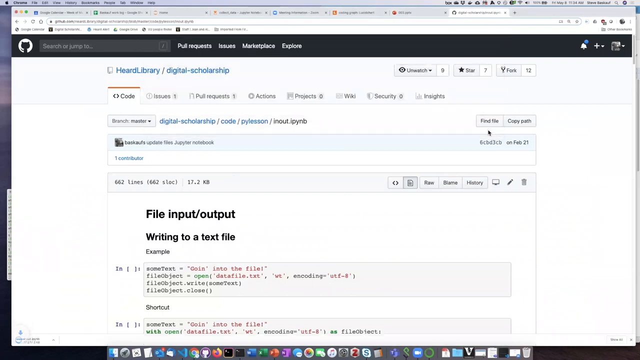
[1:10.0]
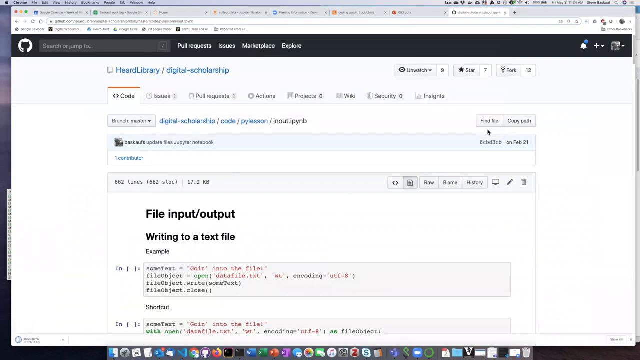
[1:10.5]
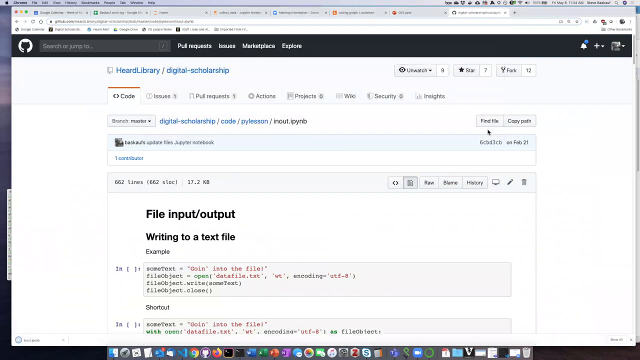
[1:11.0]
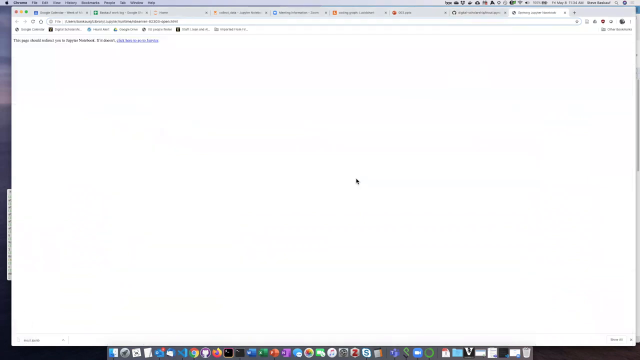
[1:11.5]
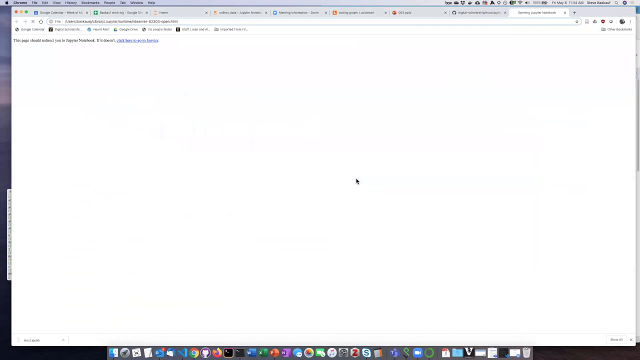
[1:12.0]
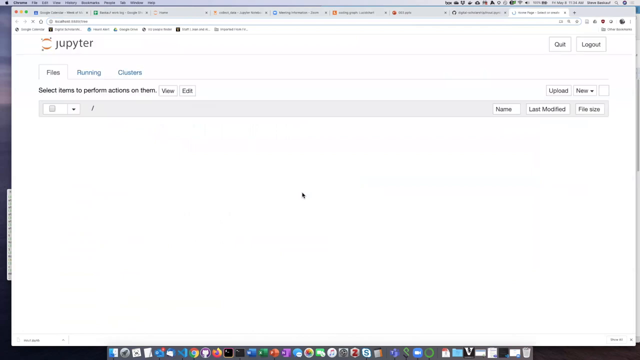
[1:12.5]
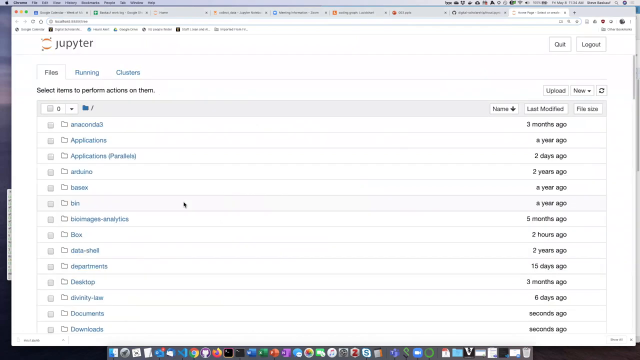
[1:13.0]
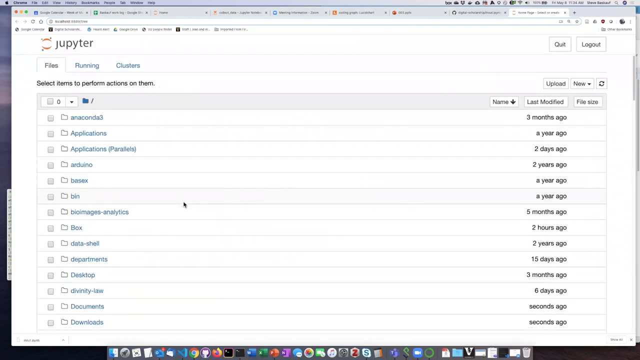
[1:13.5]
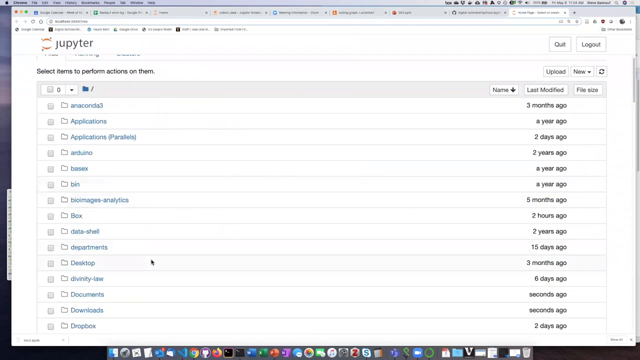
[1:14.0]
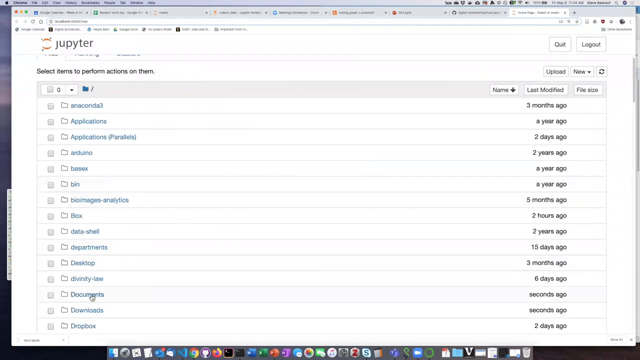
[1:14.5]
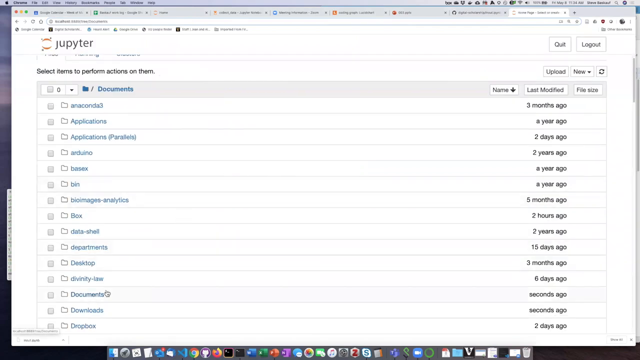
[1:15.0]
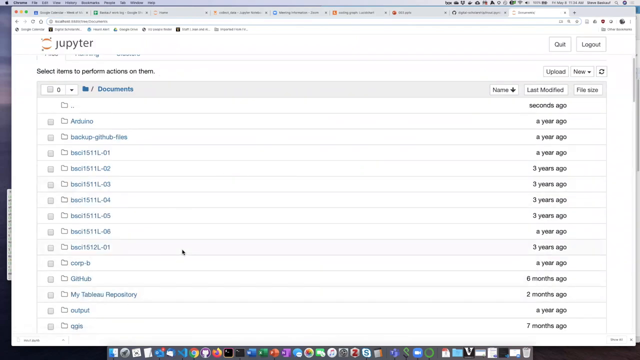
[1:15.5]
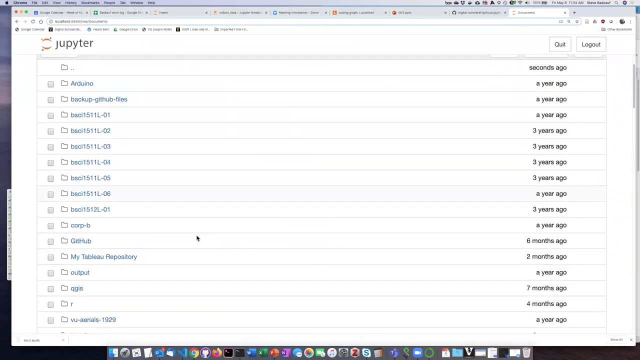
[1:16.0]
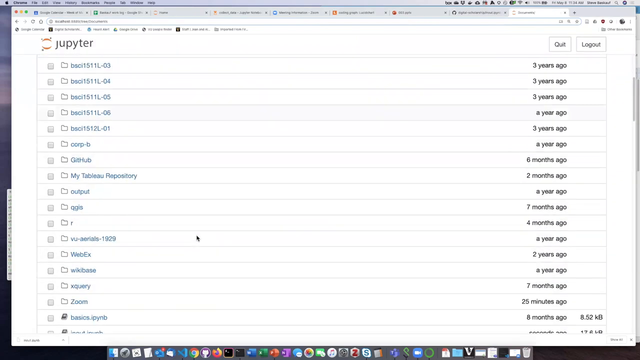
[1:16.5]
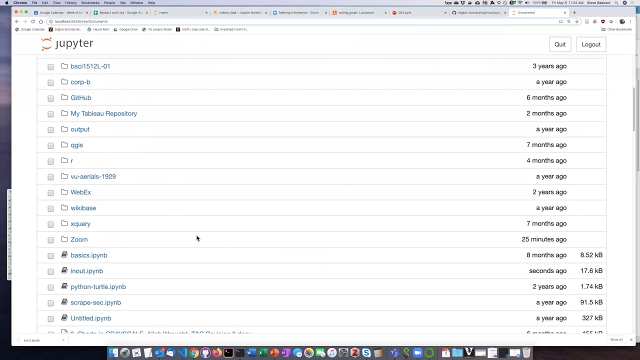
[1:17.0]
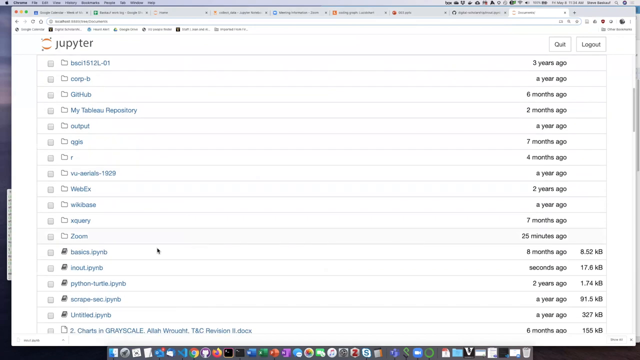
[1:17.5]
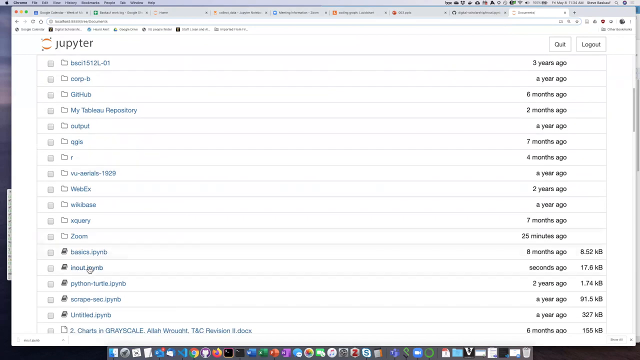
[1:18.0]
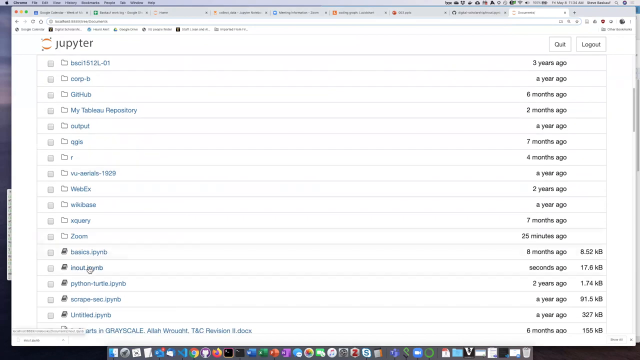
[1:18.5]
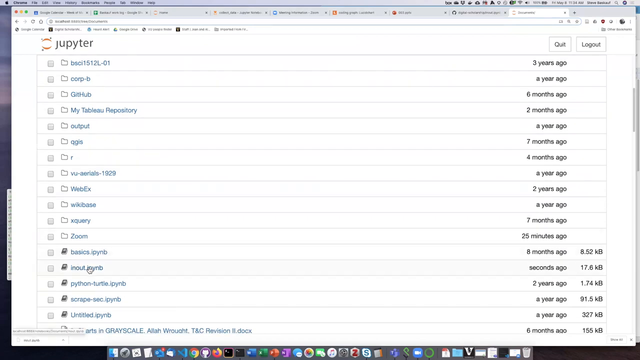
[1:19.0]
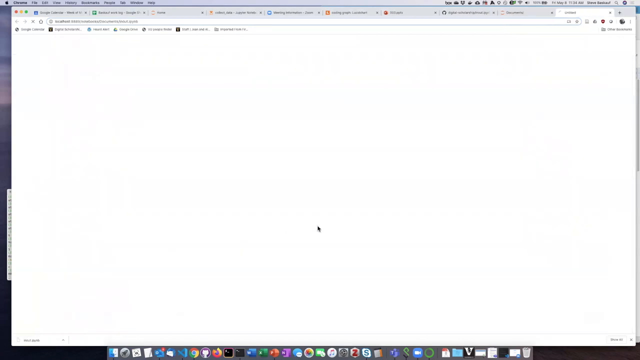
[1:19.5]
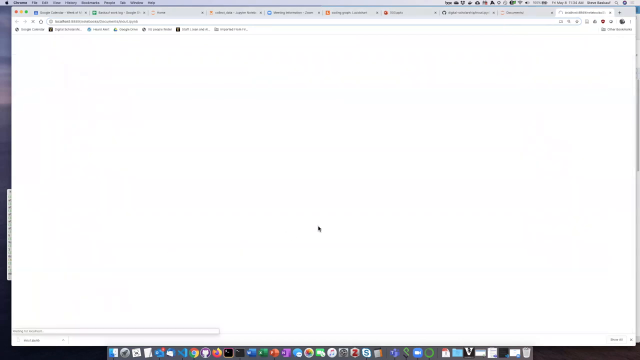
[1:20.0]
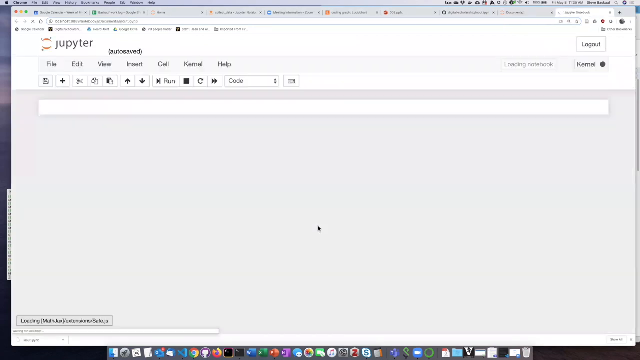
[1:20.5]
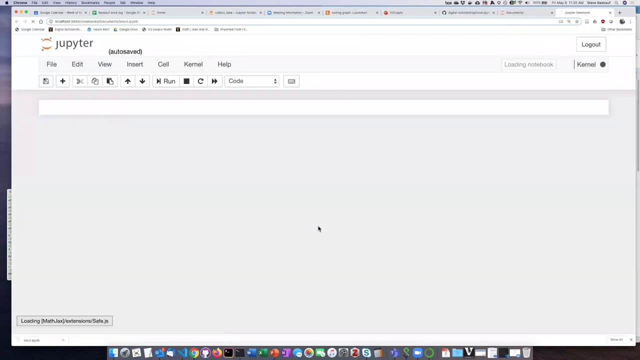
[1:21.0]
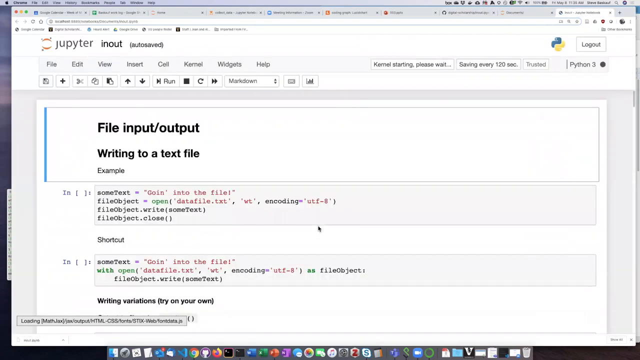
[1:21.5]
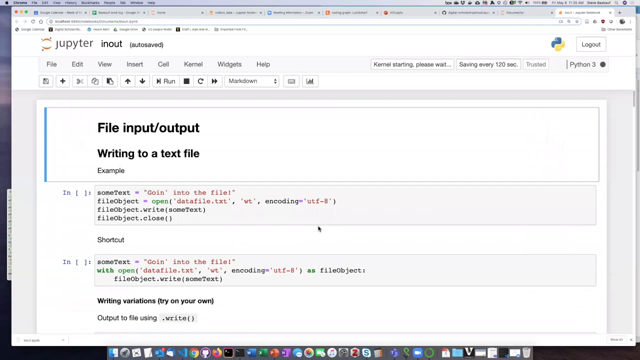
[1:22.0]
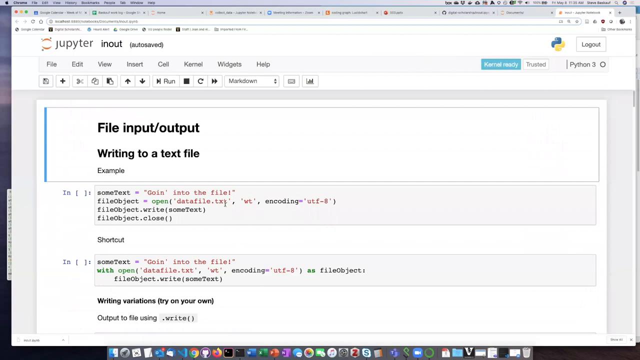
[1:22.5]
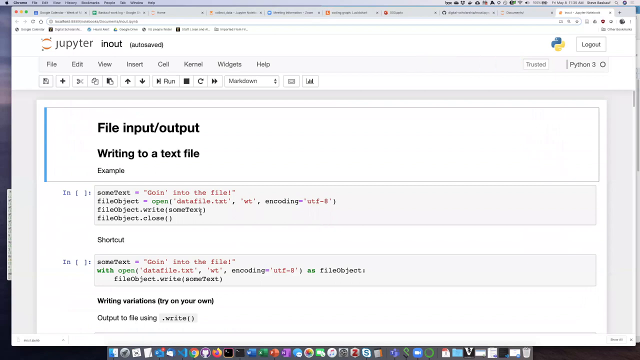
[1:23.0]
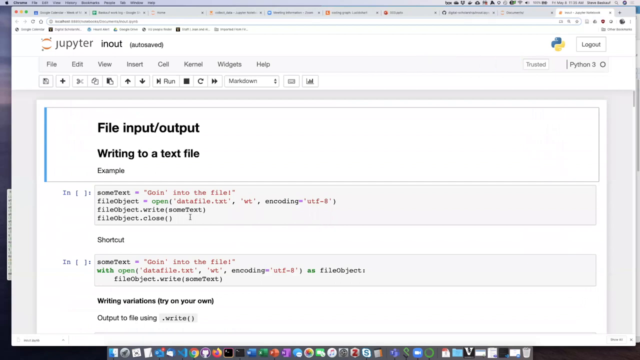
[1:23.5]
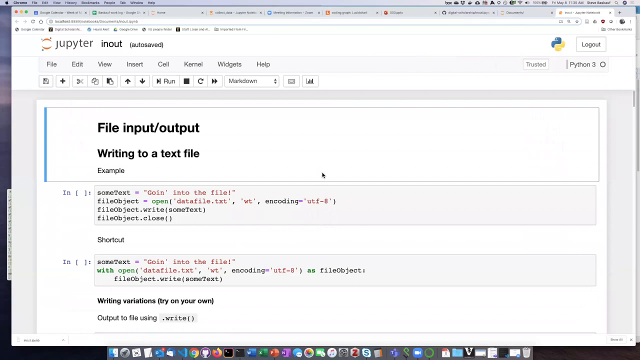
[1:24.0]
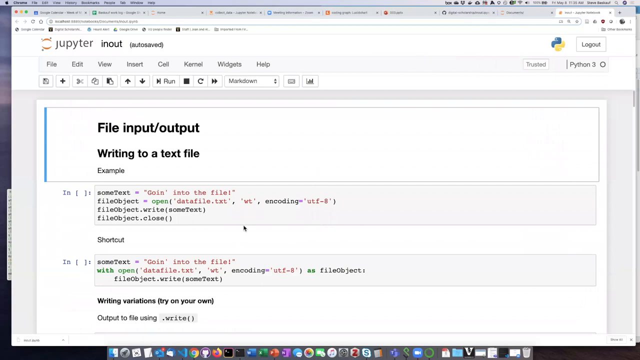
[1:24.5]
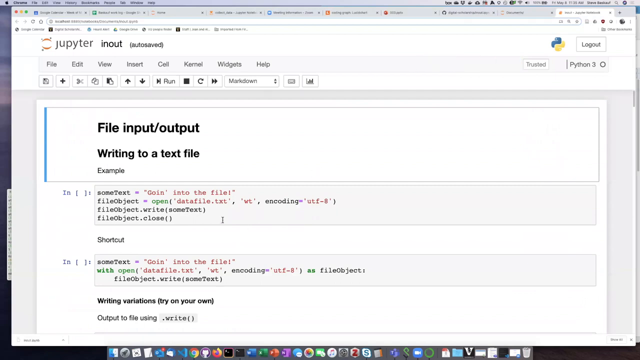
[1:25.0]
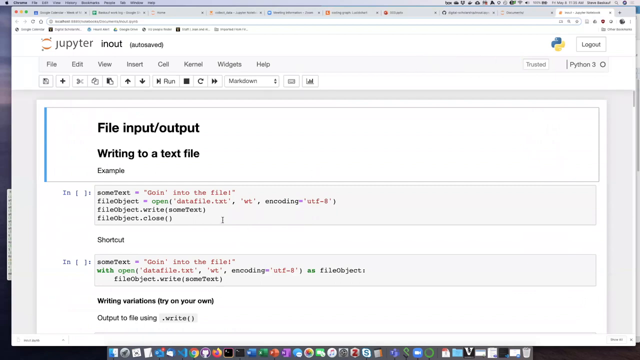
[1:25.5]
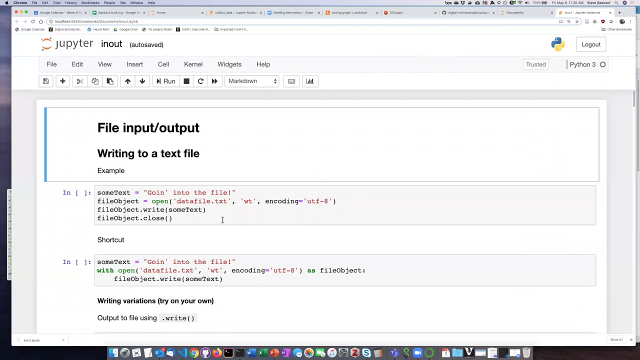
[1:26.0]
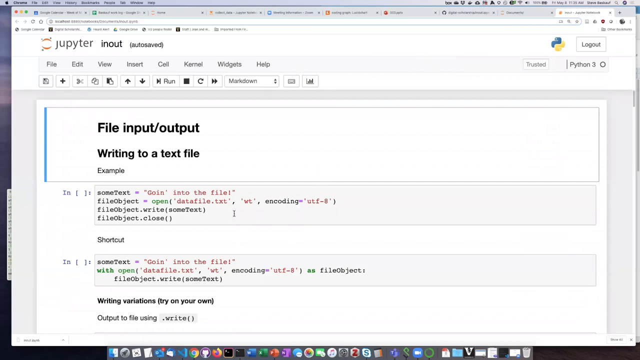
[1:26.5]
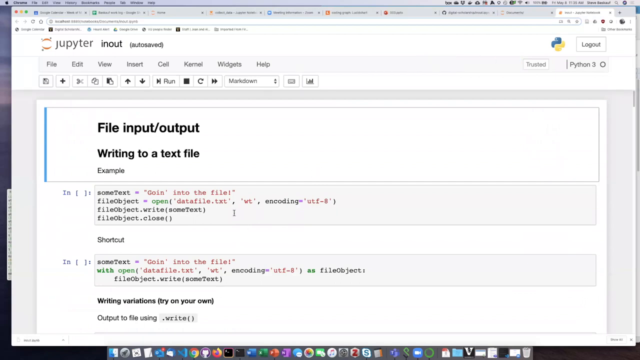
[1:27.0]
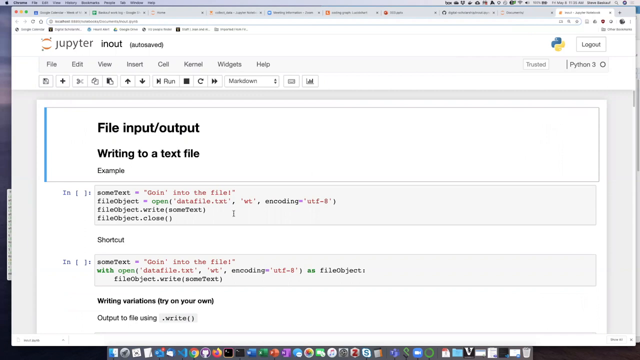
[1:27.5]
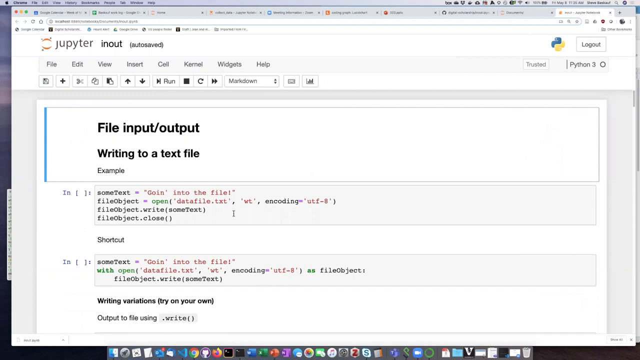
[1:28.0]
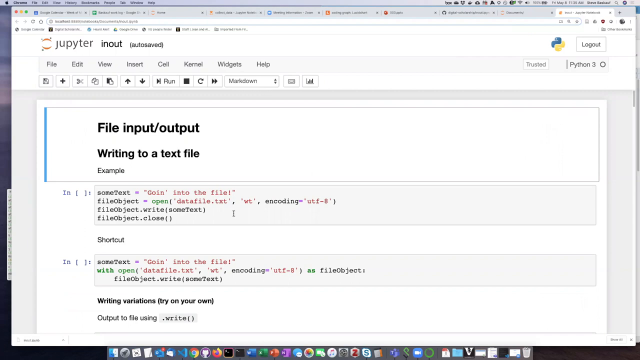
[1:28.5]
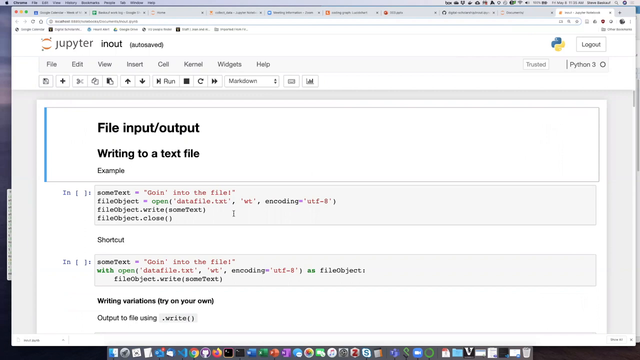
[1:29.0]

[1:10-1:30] The web page now shows a list of items, possibly file names or links, with the text "select items to perform actions on them." At least fourteen items are visible as the list scrolls quickly, apparently around 25 or so in total. The cursor clicks on one, and the "file input / output writing to a text file" page appears, with HTML code across all the boxes. The cursor moves around on the page, and then the video ends.